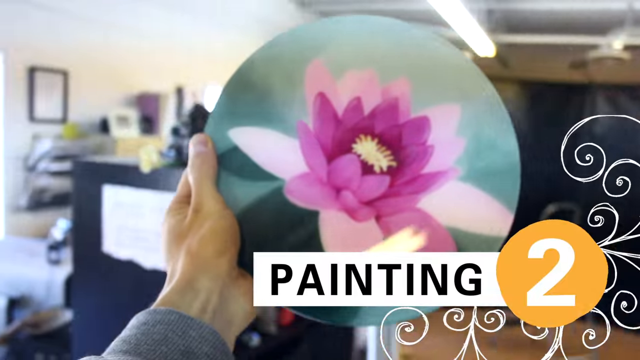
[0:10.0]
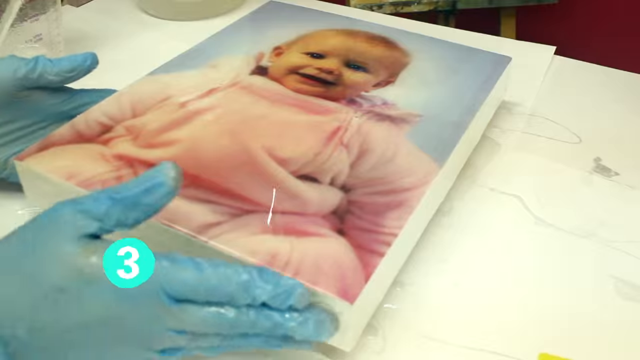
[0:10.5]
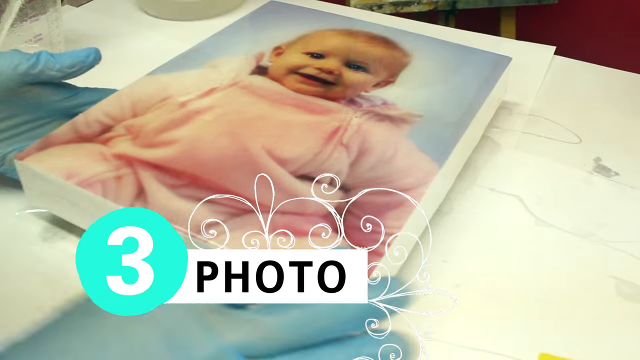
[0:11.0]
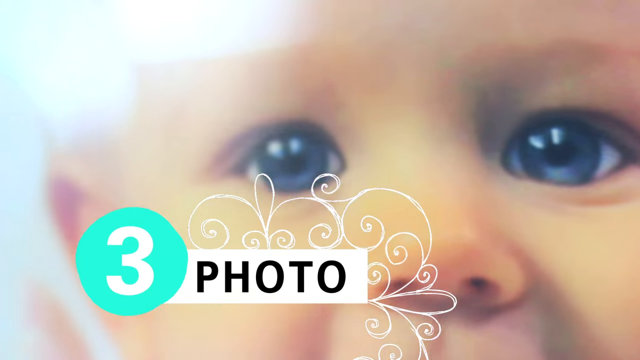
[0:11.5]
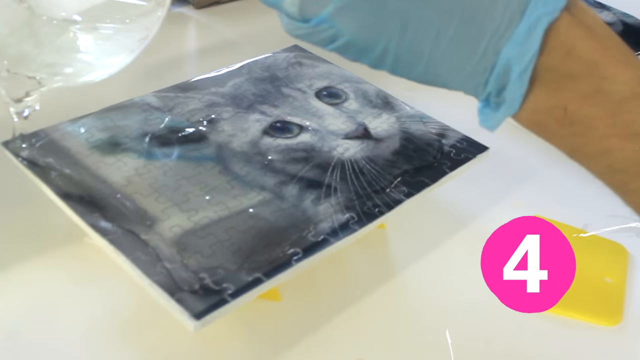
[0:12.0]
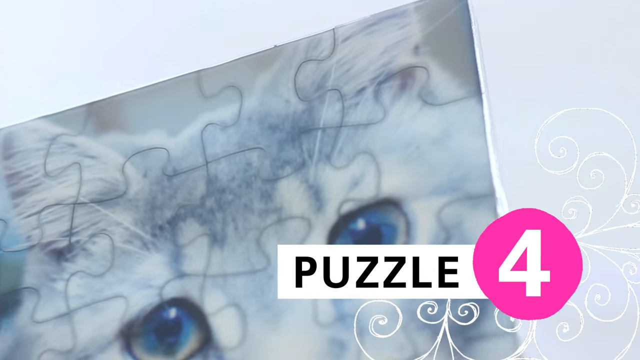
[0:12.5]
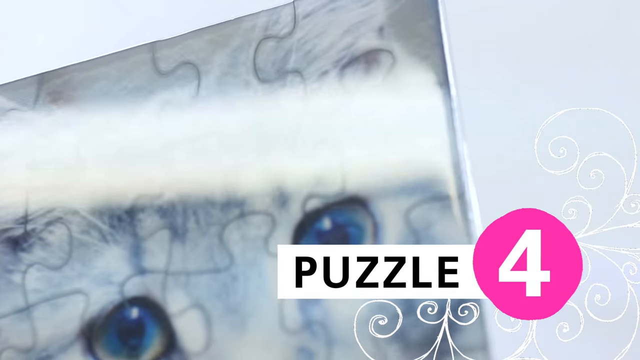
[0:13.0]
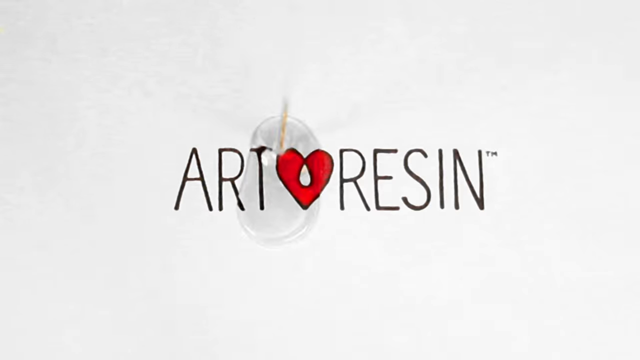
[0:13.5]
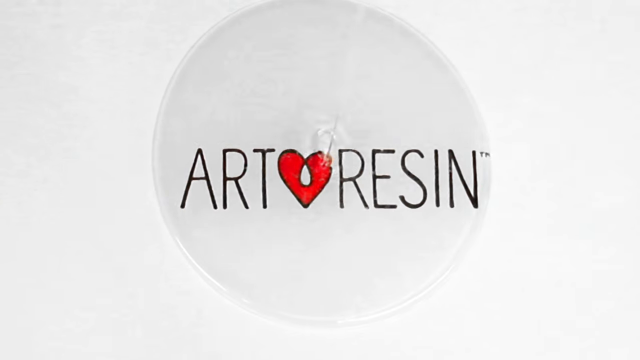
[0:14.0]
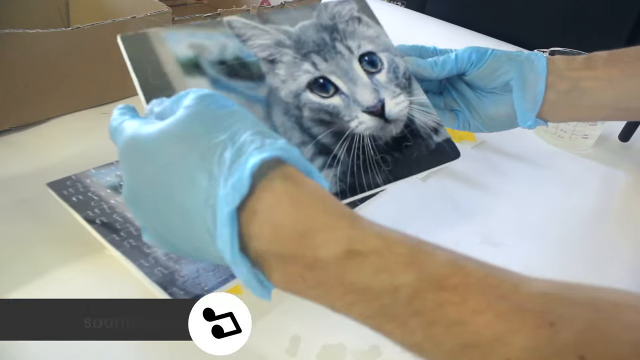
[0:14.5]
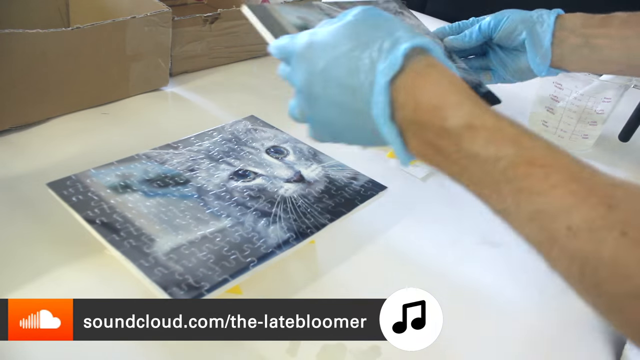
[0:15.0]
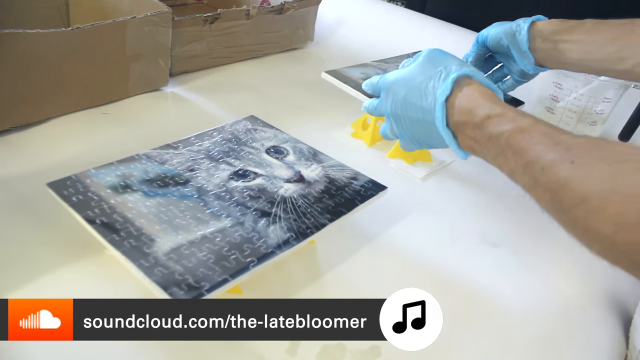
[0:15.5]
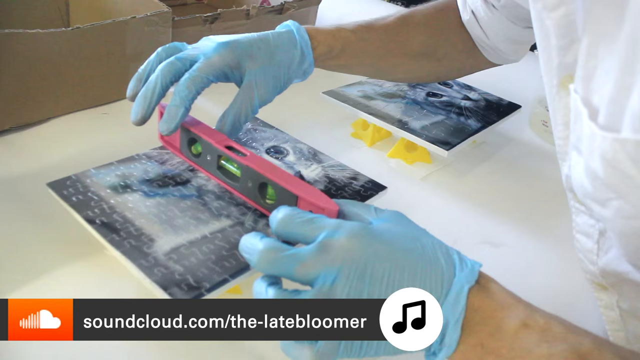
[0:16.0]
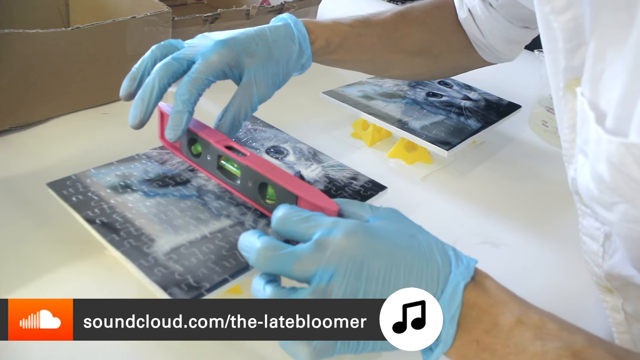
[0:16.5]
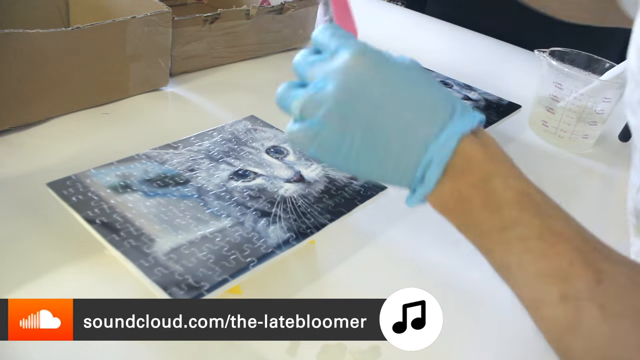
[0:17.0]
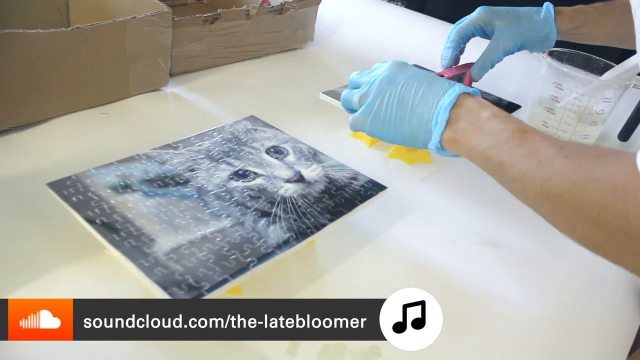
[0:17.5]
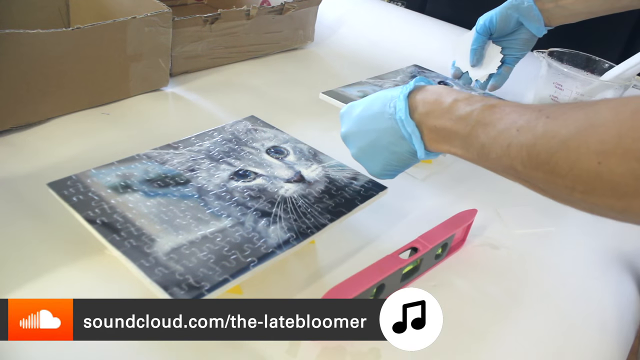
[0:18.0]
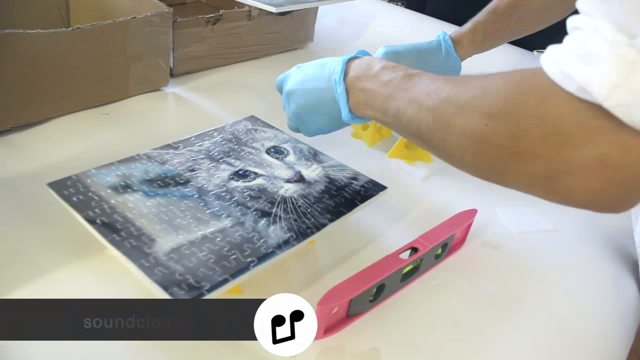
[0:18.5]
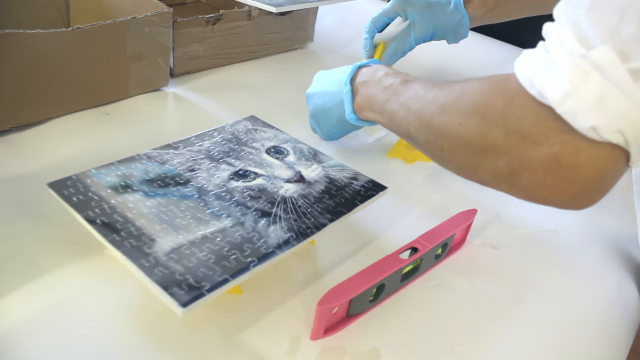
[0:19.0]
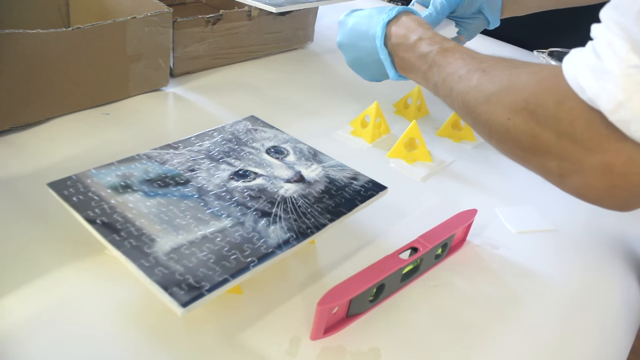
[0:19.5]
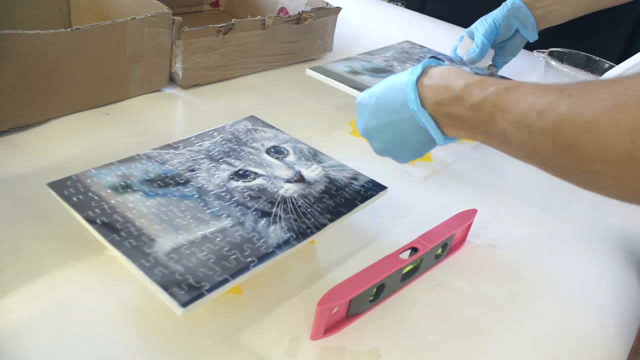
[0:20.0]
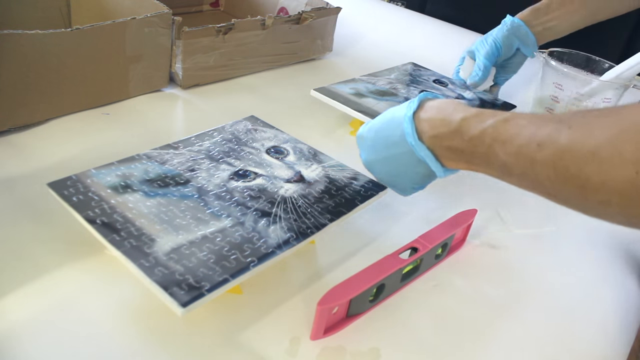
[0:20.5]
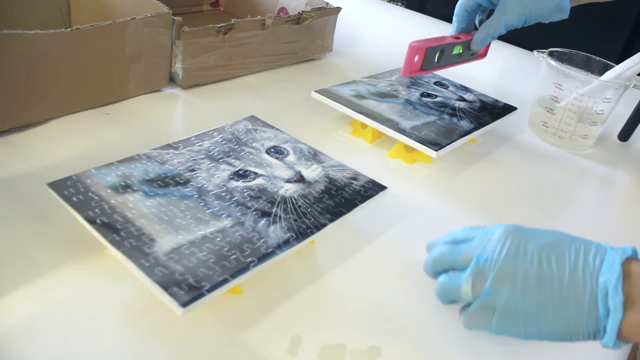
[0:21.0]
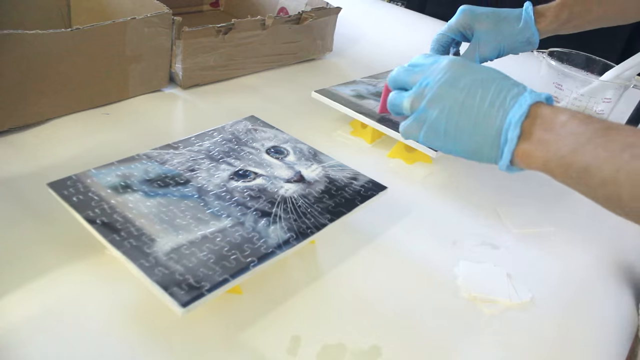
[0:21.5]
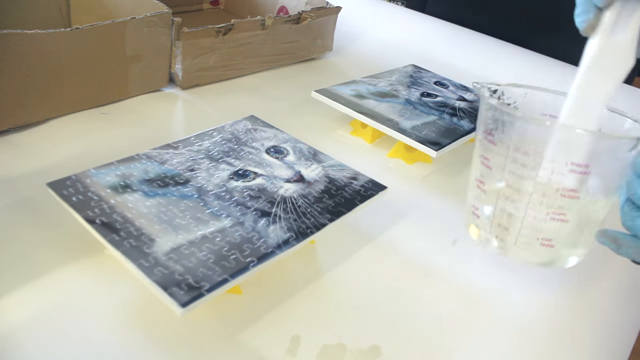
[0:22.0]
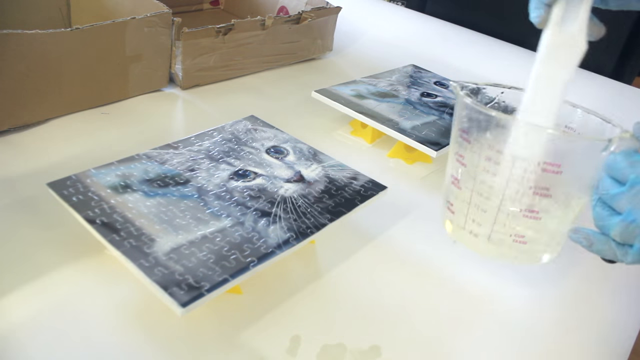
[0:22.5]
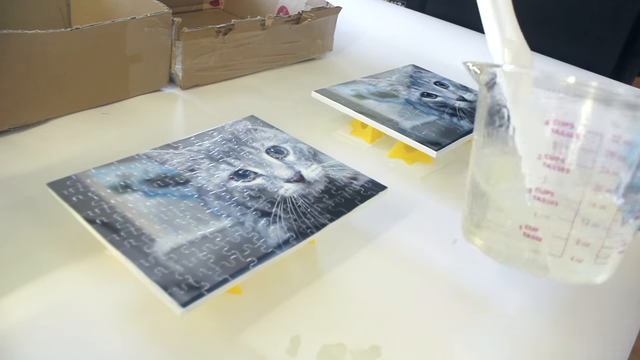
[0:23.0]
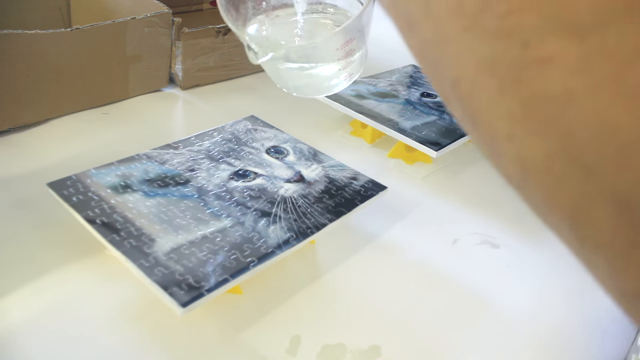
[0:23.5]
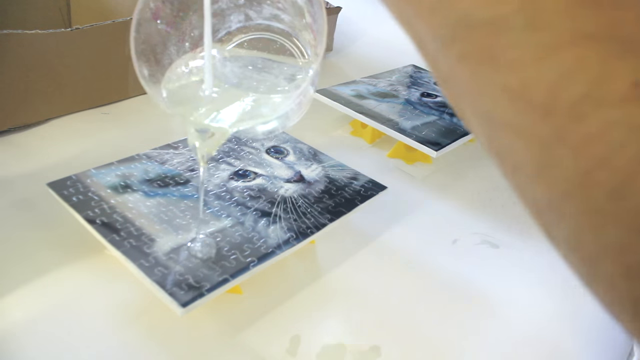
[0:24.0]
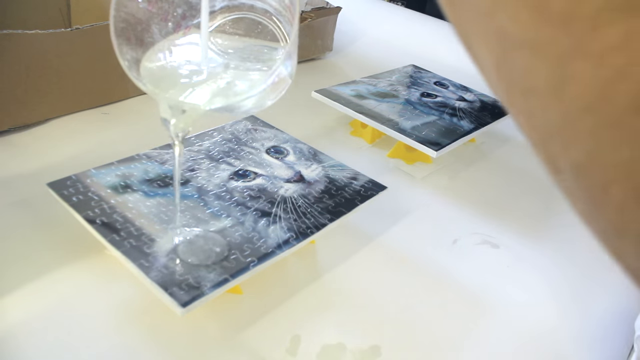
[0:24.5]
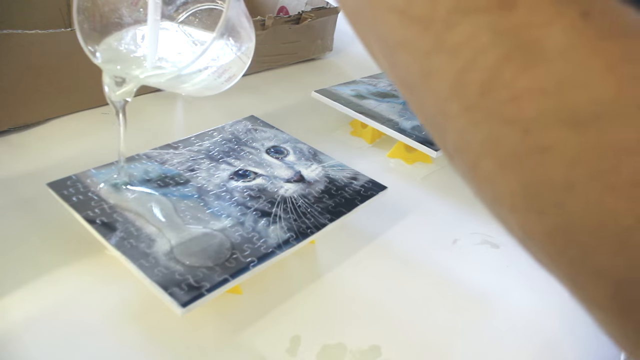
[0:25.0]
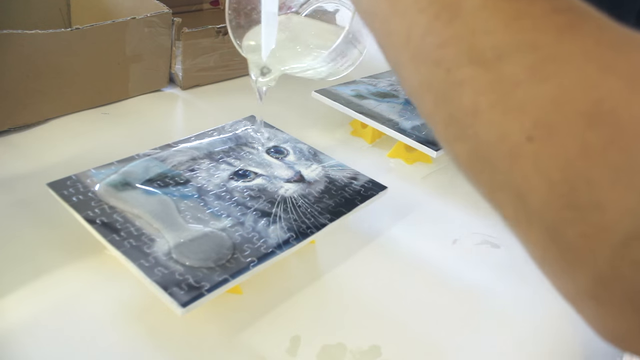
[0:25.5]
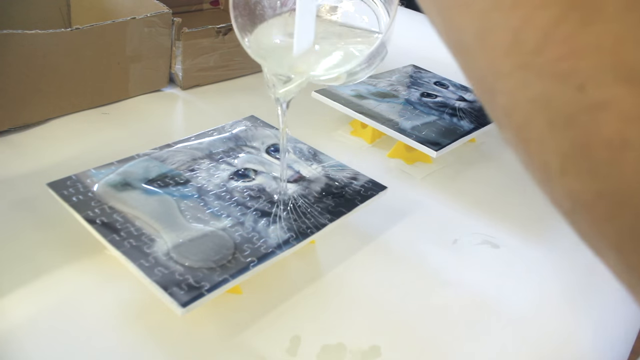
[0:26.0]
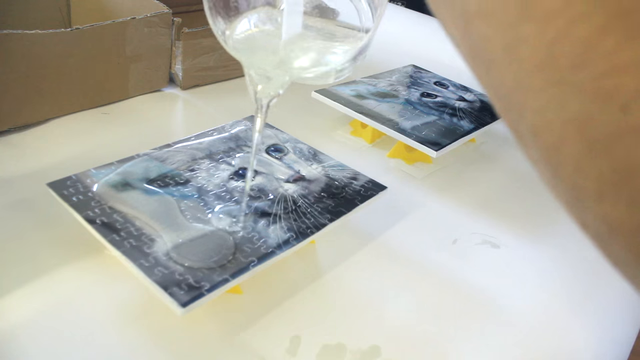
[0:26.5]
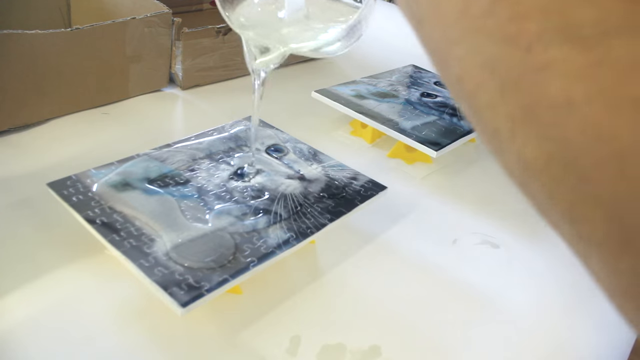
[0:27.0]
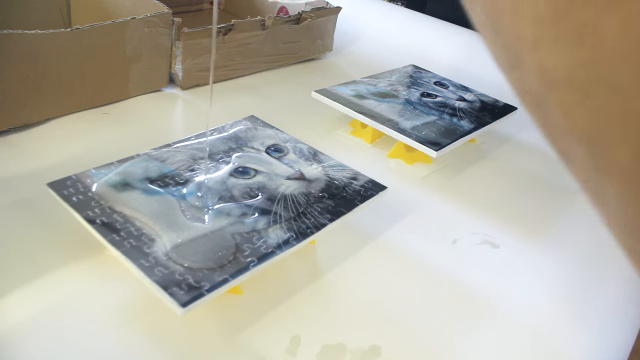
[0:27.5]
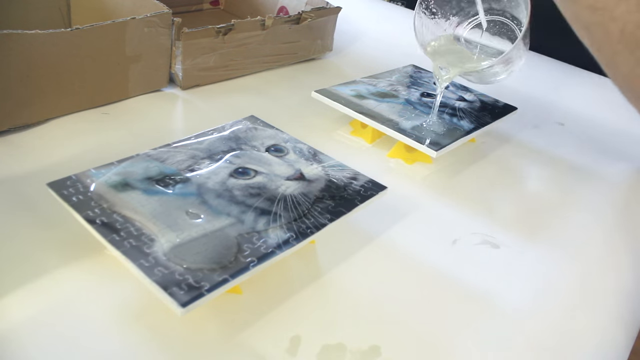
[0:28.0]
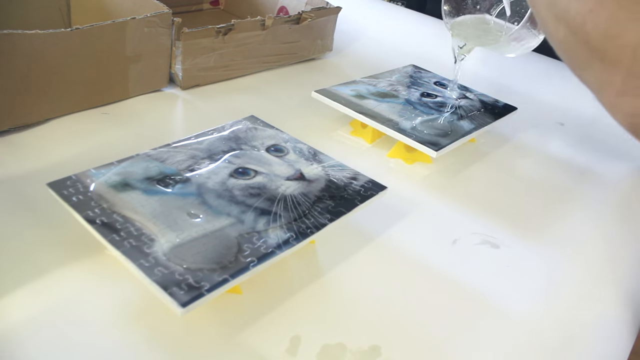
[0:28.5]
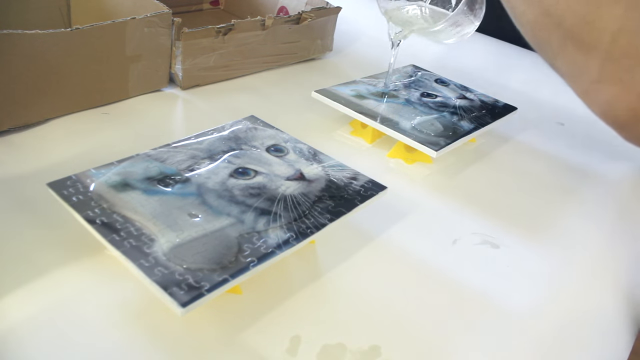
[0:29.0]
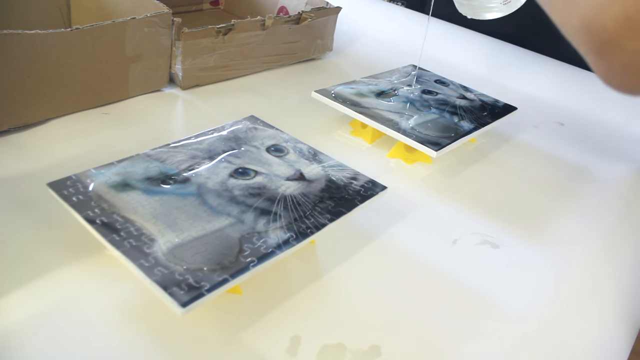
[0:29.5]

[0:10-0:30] A white man wearing blue gloves has two cat frames and puts something like water on them so that they look nice. He measures the cat frames with something like a ruler, and there is a cup of water that he sprays. A yellow item under the cat frame has "art design" written on it, and there is a note in the corner. The table is white, and there are brown boxes on top of it. A baby photo appears, apparently one he made a frame for; the baby wears pink, smiles, and has white skin. The cat frames are shown repeatedly as they are worked on, and there is also a frame in pink and green. In the background there are a mirror and tables, so the setting seems to be a workshop or painting office.